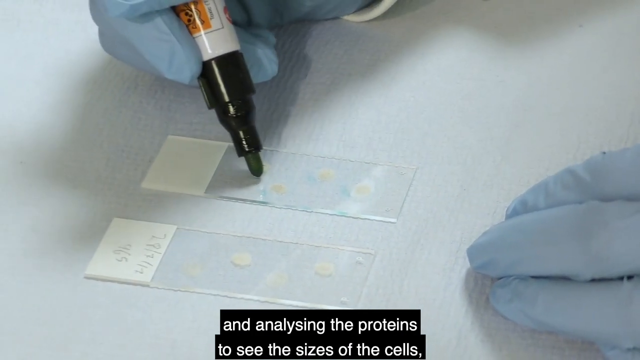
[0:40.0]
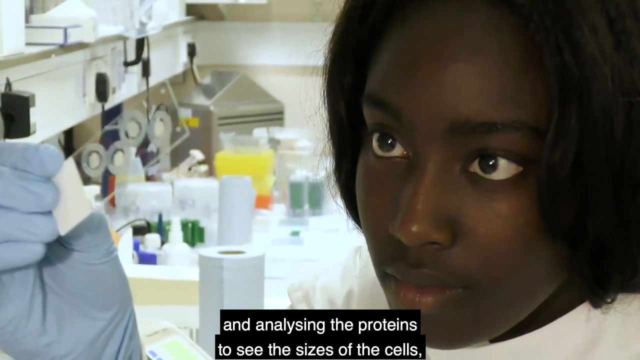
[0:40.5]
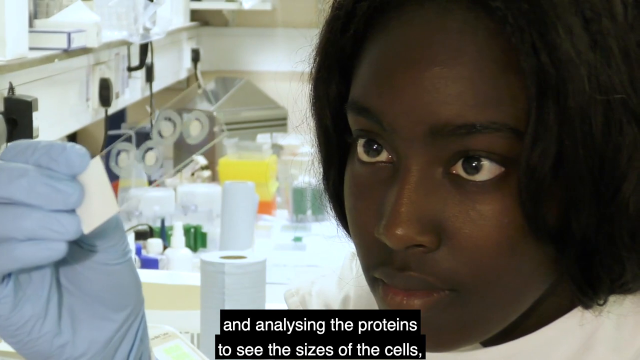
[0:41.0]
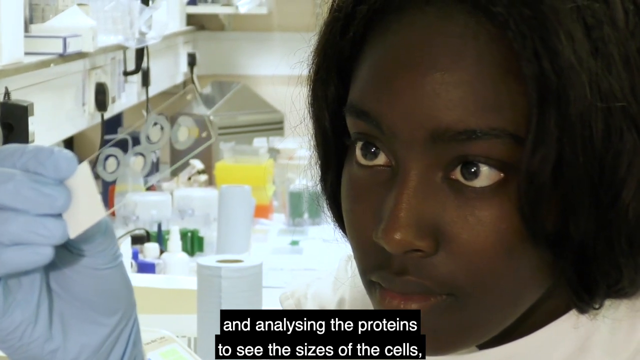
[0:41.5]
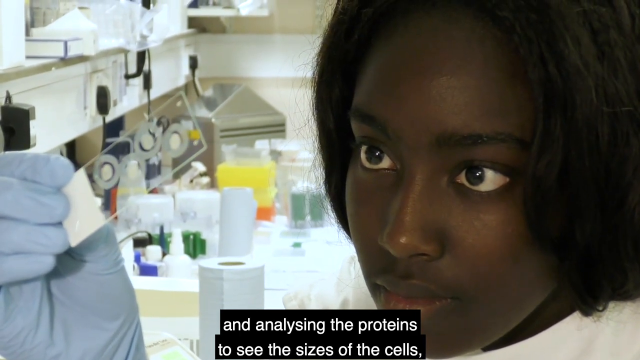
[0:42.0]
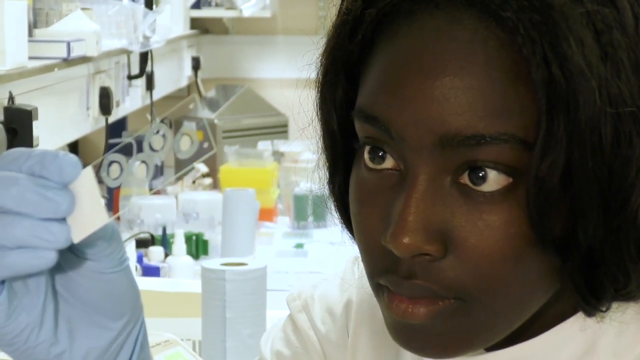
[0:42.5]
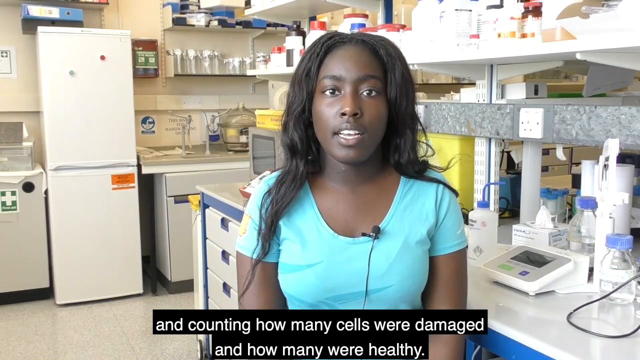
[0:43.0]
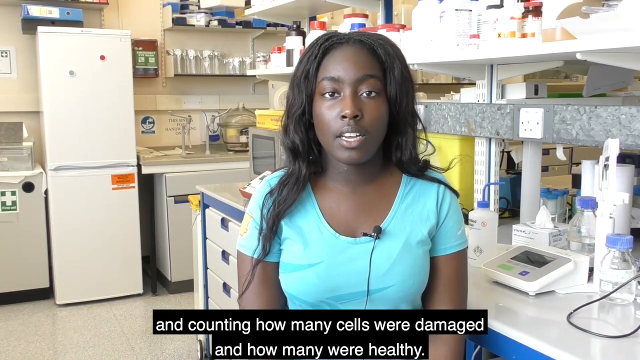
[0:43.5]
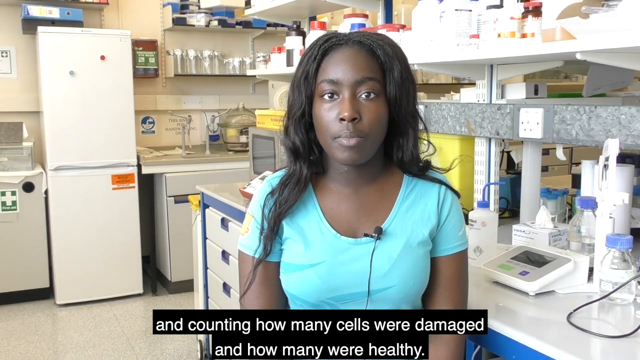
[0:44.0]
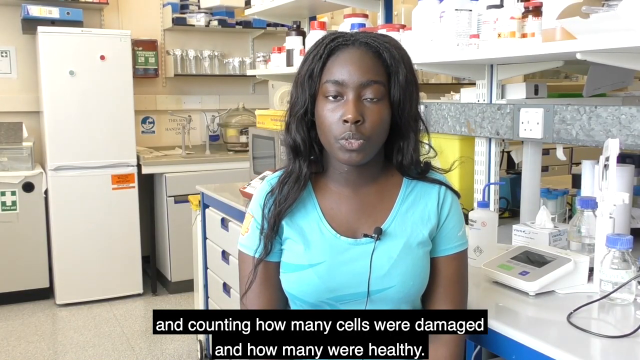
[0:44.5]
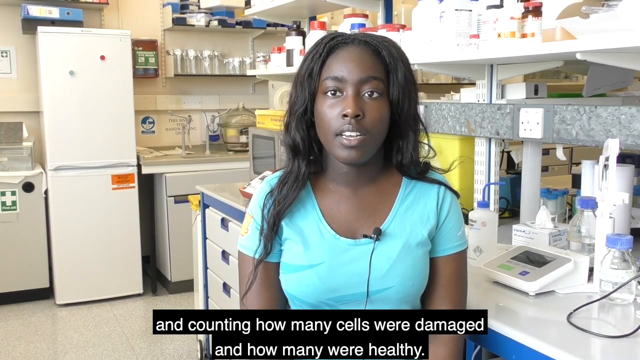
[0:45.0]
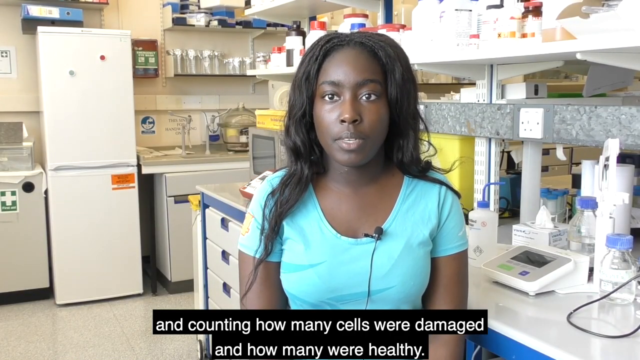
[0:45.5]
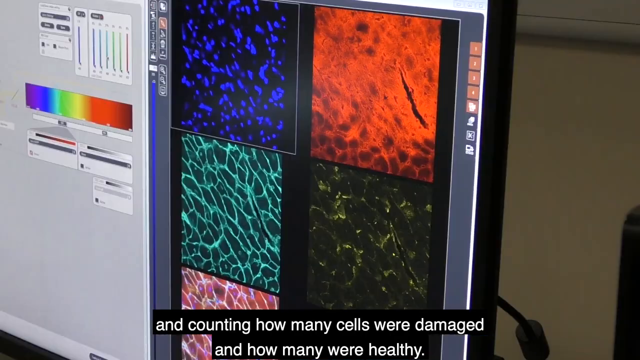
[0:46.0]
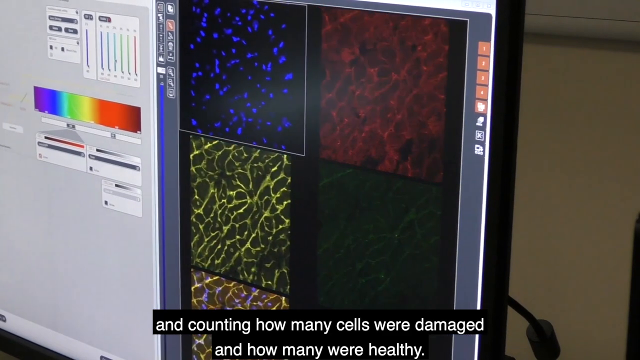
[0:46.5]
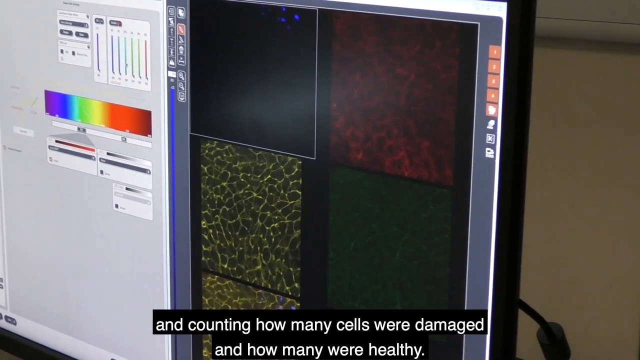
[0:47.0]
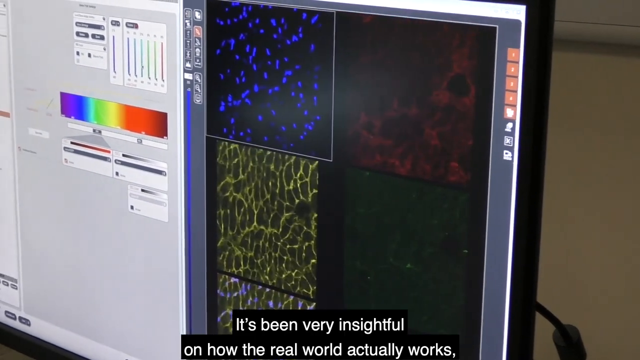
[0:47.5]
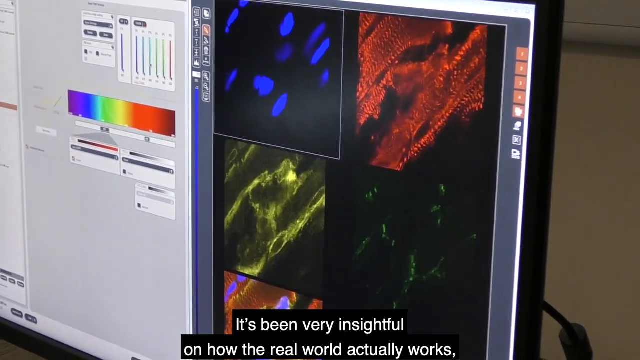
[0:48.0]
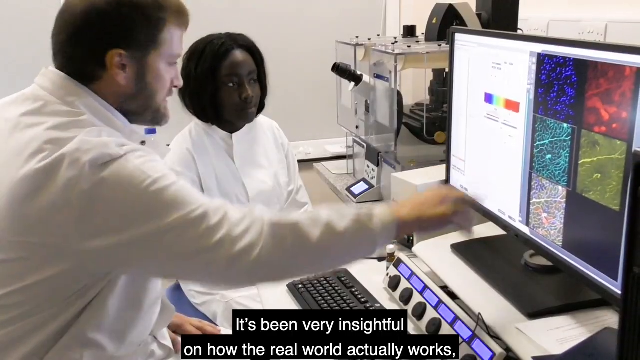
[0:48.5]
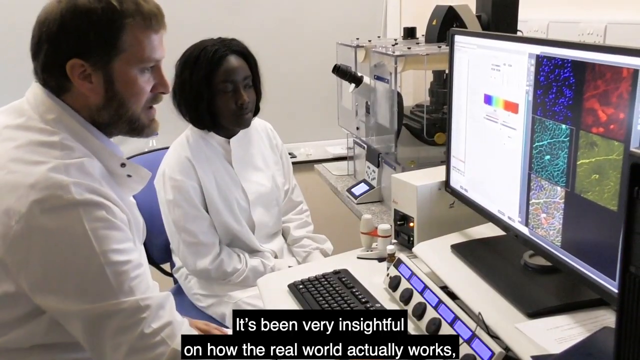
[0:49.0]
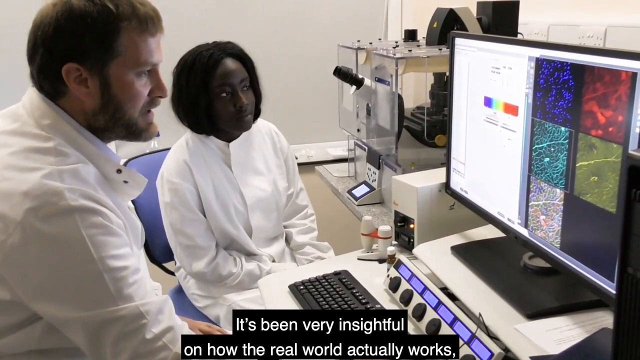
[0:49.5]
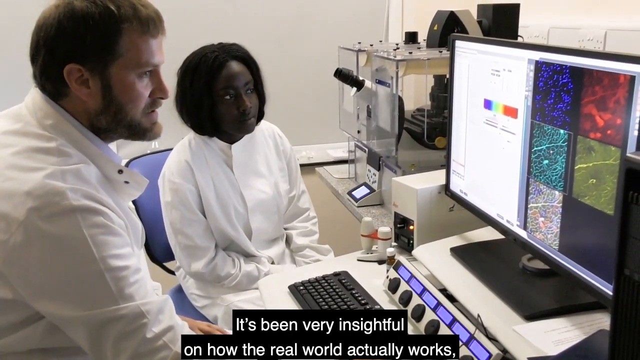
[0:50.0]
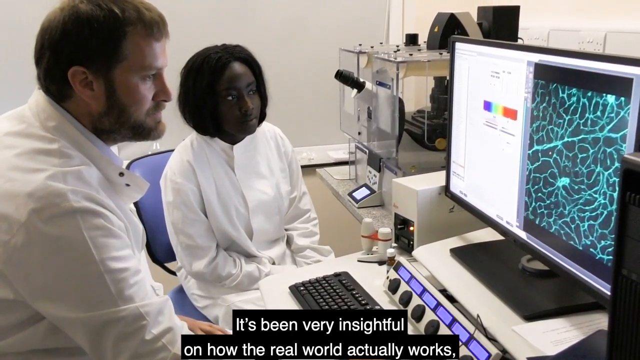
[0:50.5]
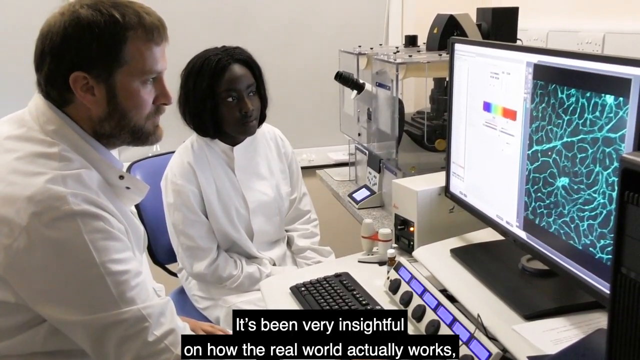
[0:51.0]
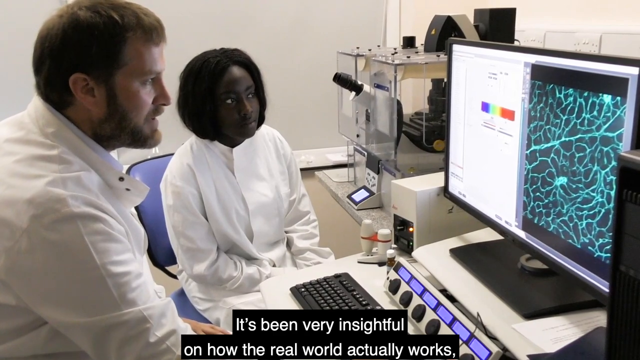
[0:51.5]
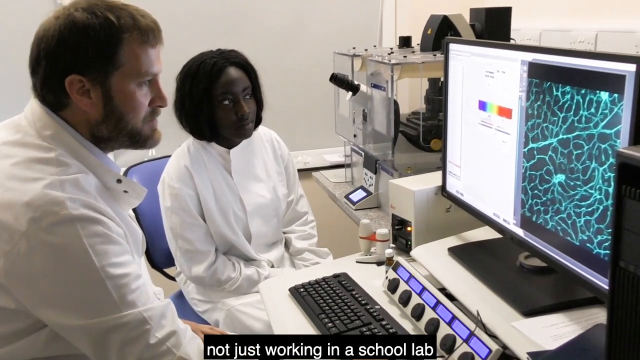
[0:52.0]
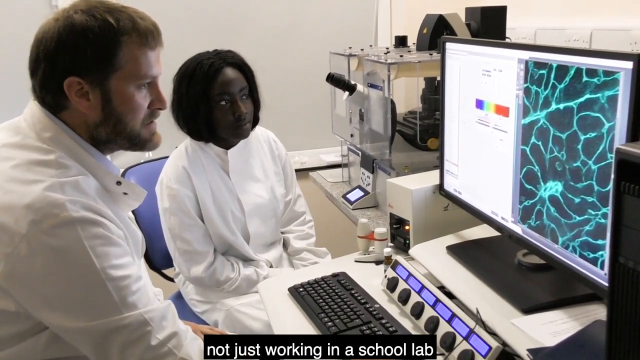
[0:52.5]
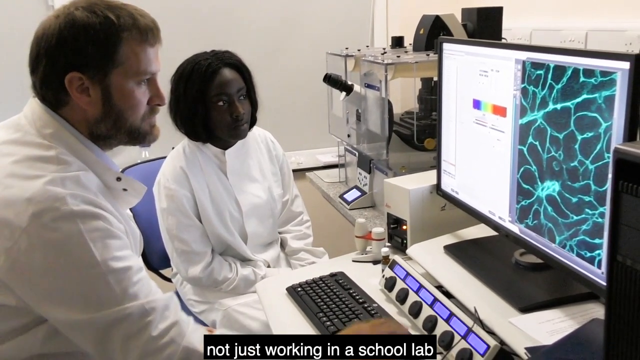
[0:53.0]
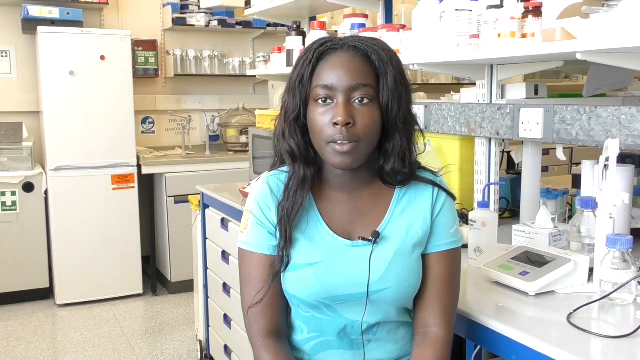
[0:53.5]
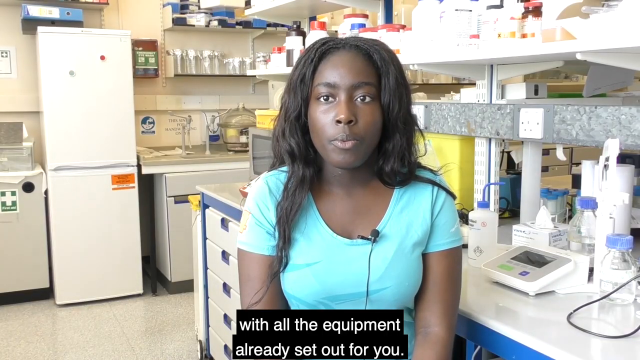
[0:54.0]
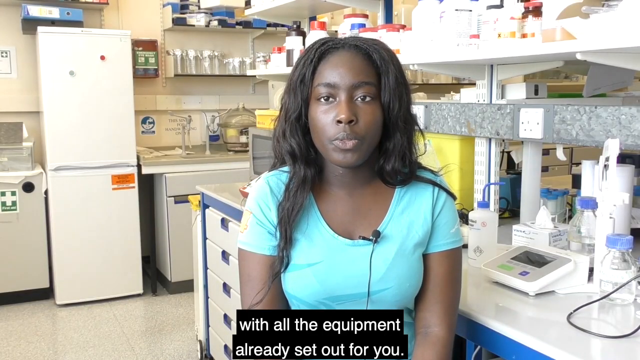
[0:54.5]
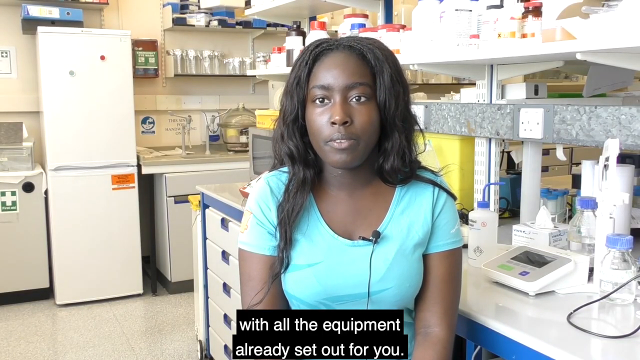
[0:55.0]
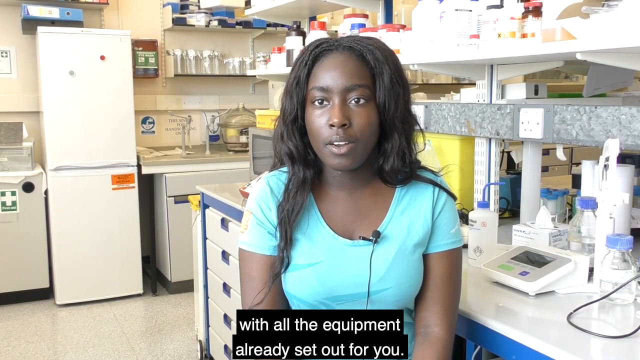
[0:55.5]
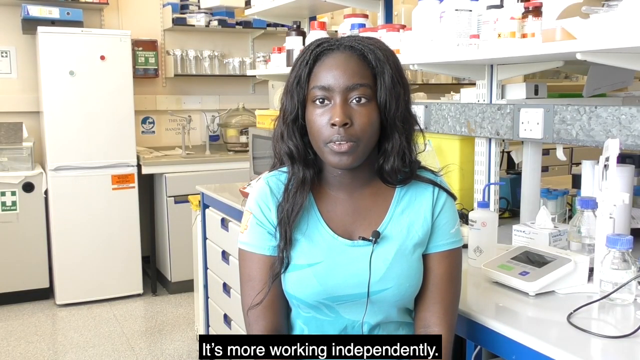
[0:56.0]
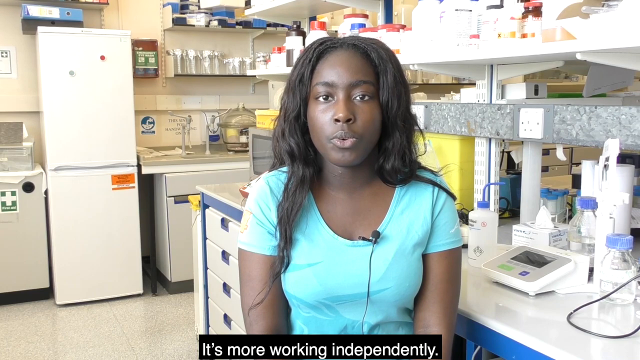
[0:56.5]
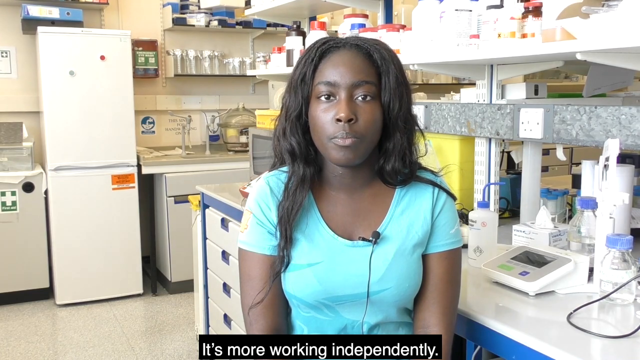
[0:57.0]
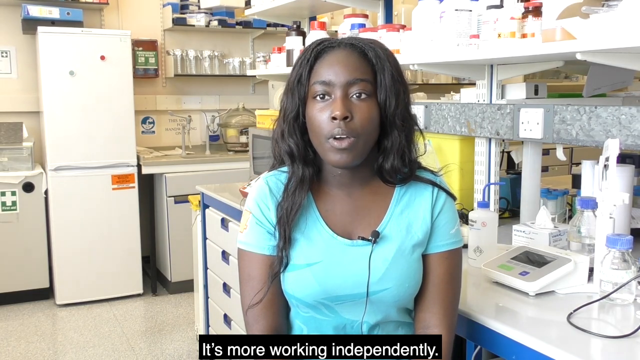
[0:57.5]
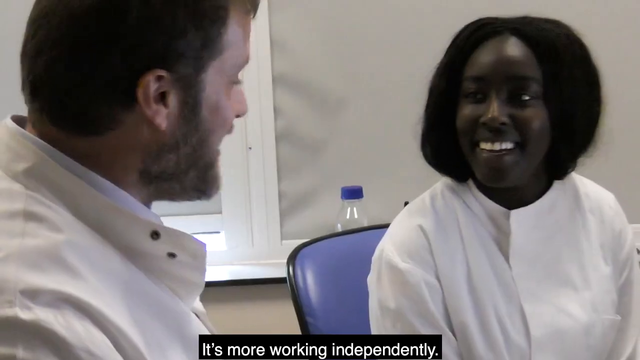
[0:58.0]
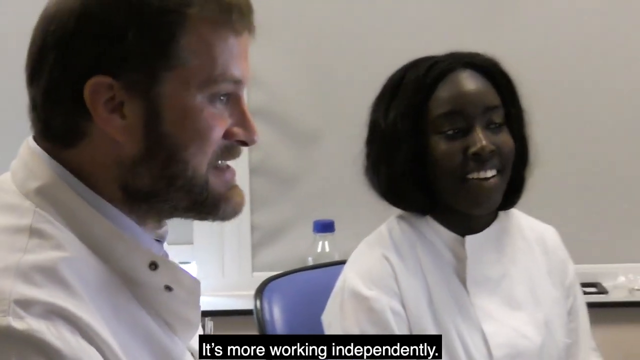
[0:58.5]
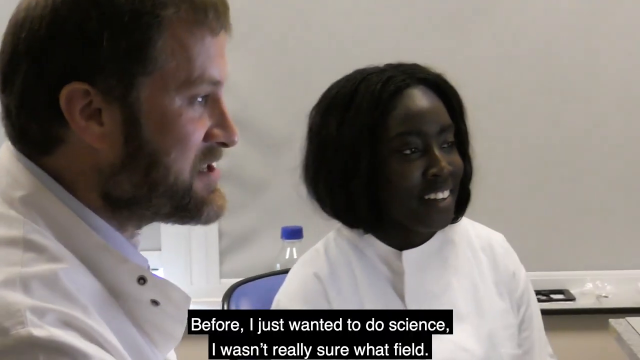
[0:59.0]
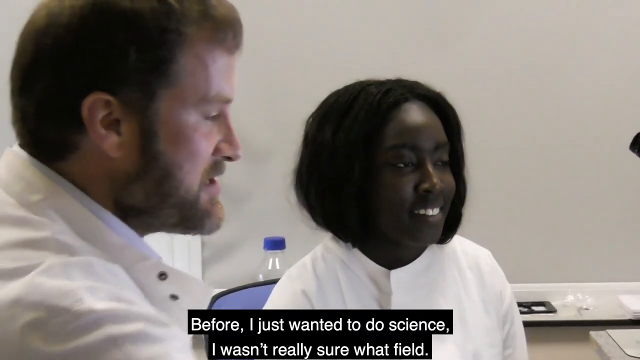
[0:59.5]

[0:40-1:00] The young woman writes on some slides with a permanent marker. The video cuts to her speaking to the camera, and then to a computer where she sits with James. They seem to be looking at images from slides, possibly the slides she was working with earlier. The images seem to be different colors, with some blue cells and some red images. James sits in front of the computer, moving the mouse and selecting the different images, while she sits next to him; both look at the screen. She wears the white lab coat, and James is also wearing a white lab coat. Below the computer monitor are some dials or knobs.